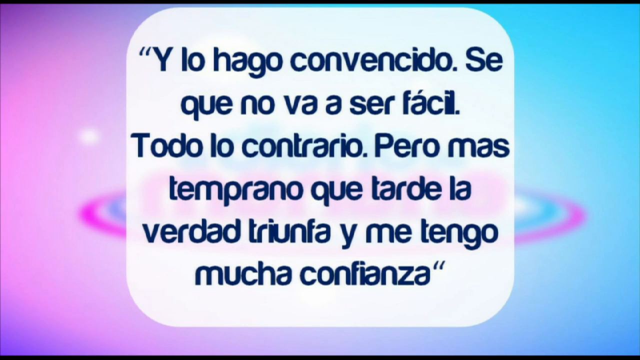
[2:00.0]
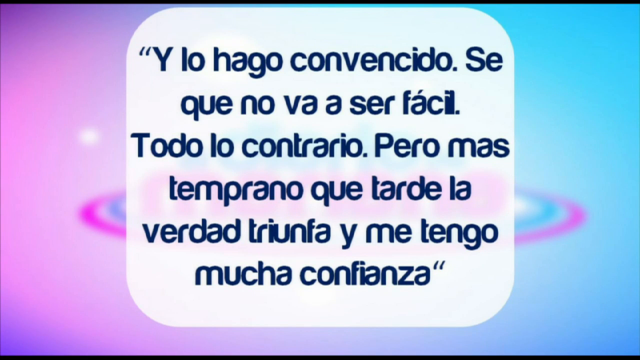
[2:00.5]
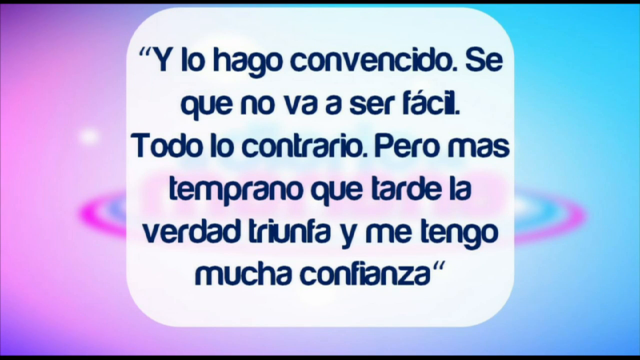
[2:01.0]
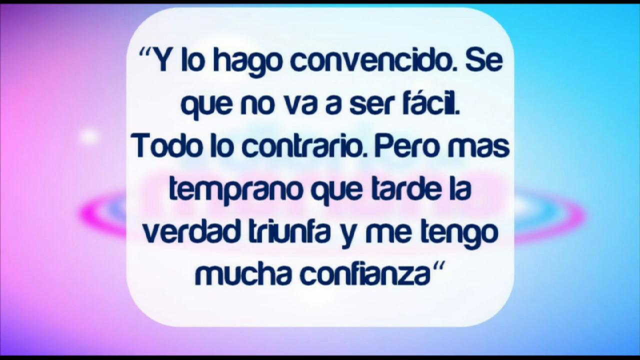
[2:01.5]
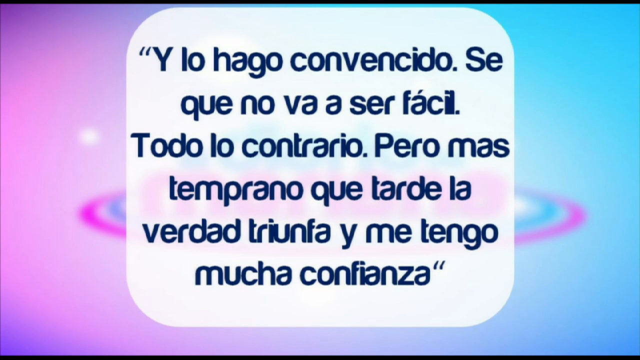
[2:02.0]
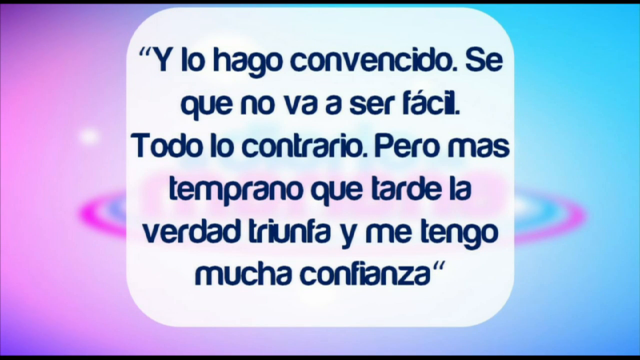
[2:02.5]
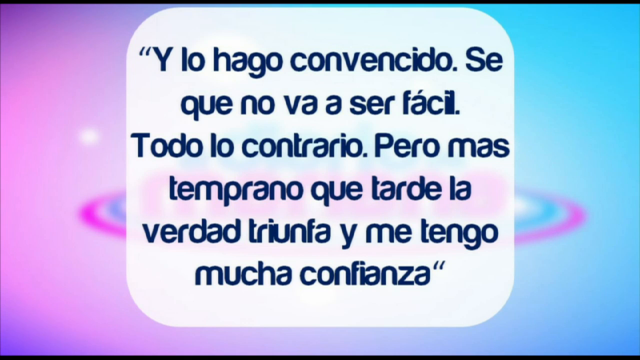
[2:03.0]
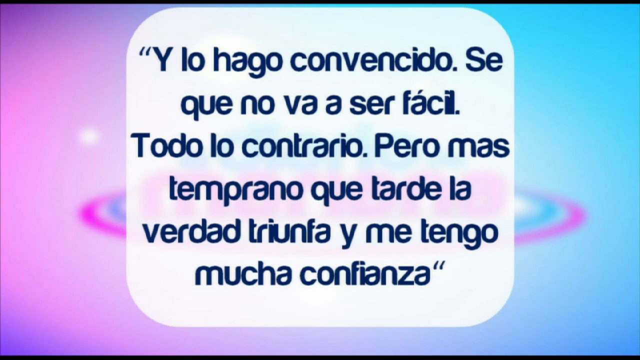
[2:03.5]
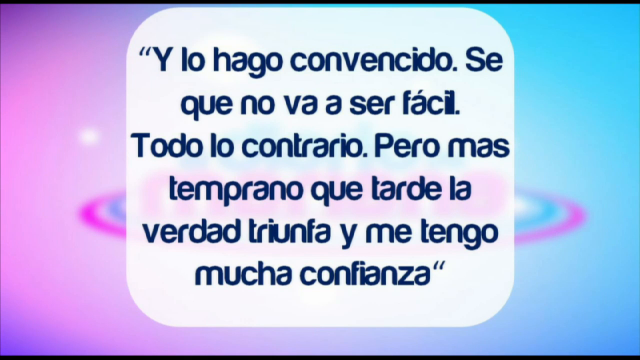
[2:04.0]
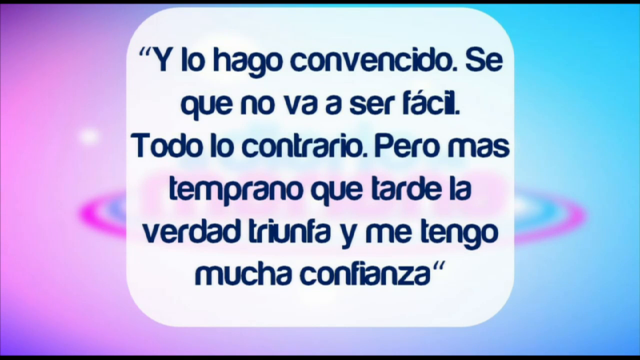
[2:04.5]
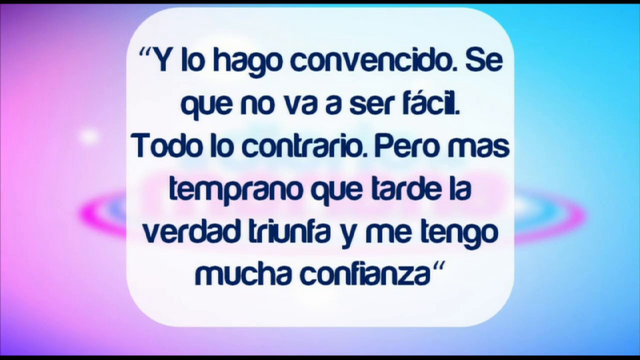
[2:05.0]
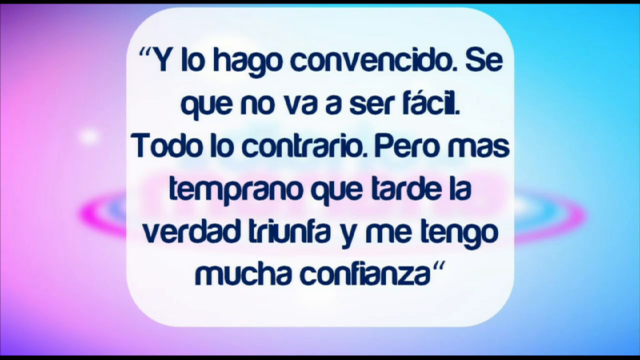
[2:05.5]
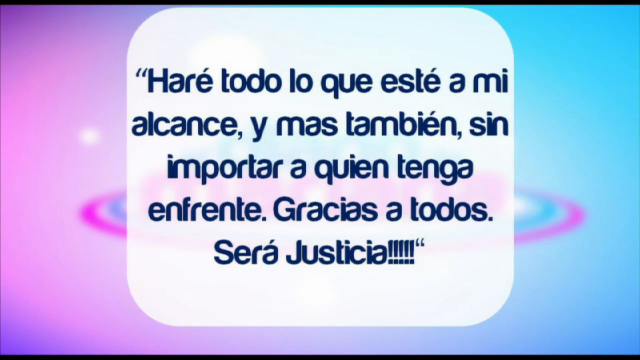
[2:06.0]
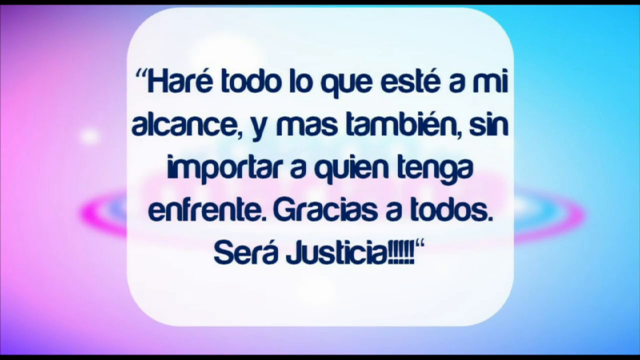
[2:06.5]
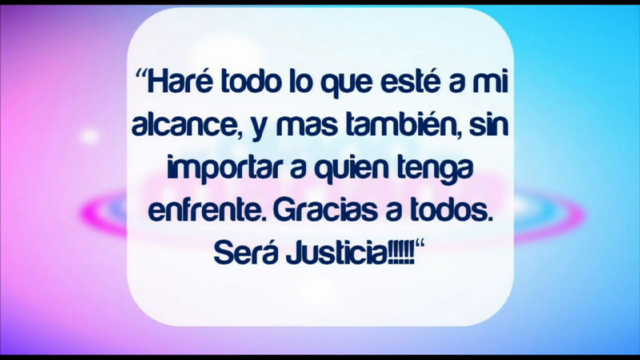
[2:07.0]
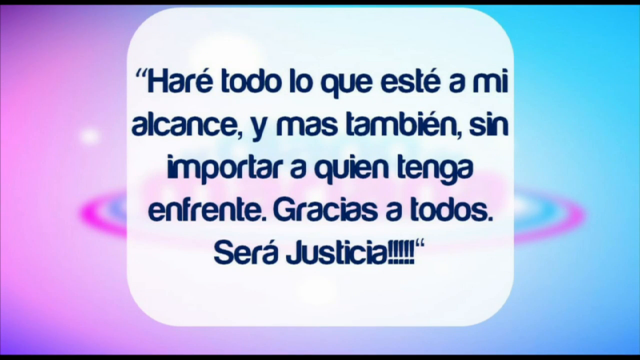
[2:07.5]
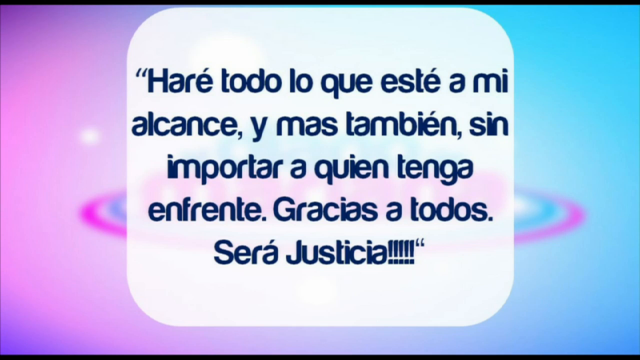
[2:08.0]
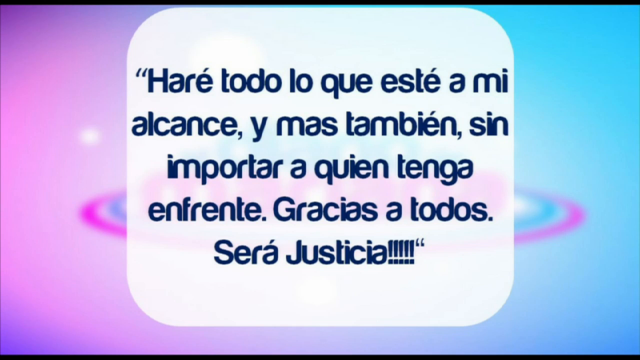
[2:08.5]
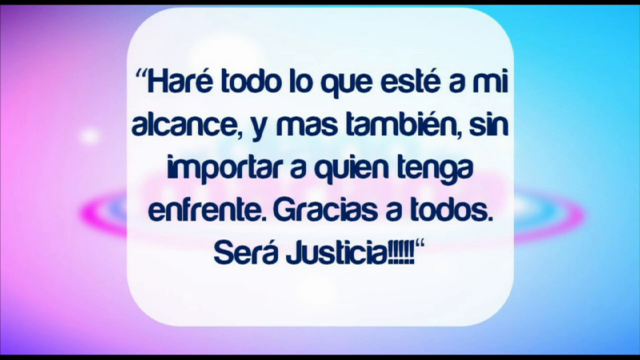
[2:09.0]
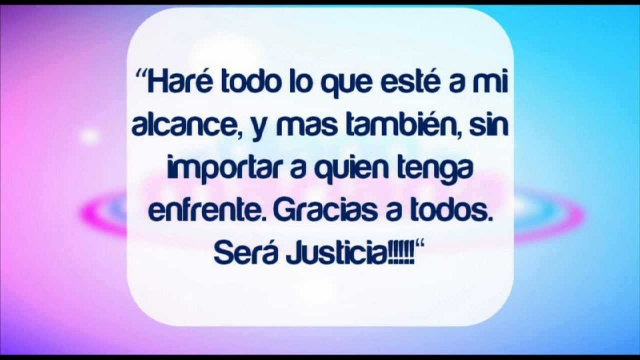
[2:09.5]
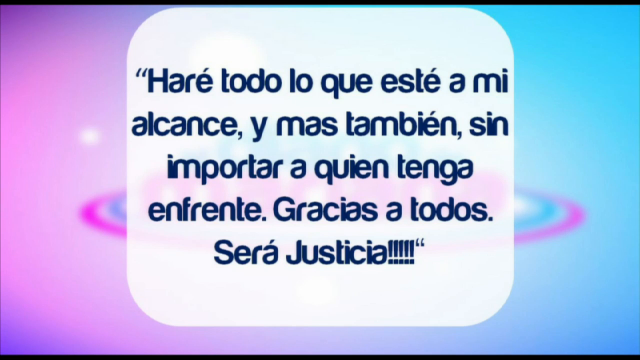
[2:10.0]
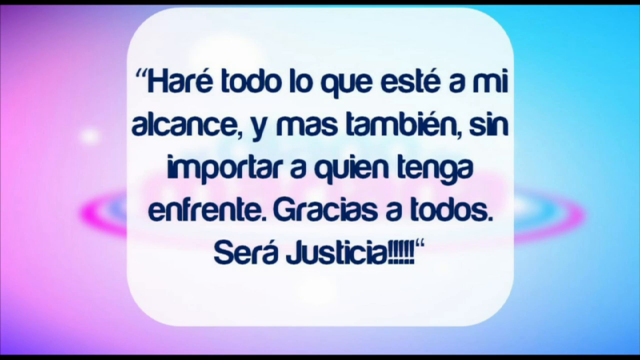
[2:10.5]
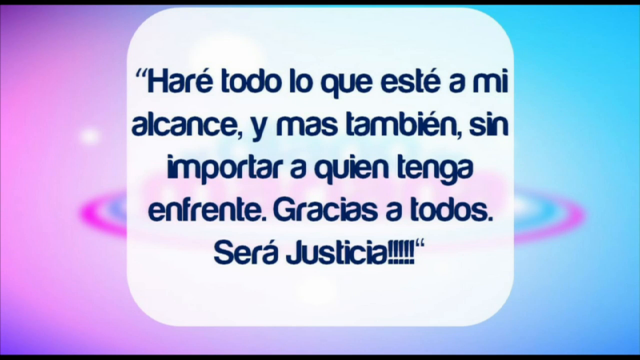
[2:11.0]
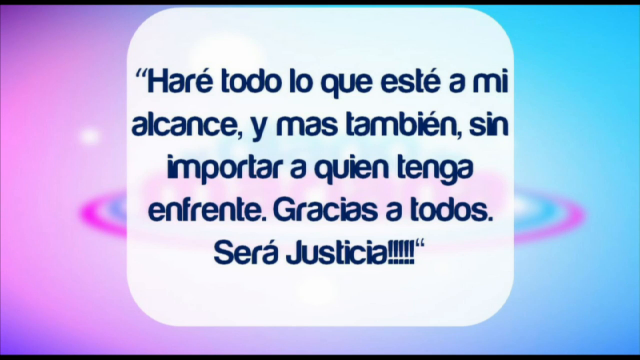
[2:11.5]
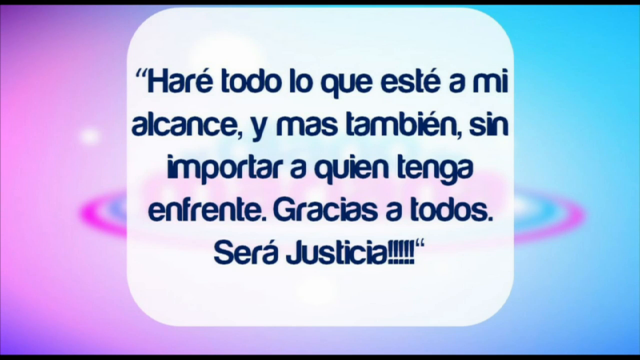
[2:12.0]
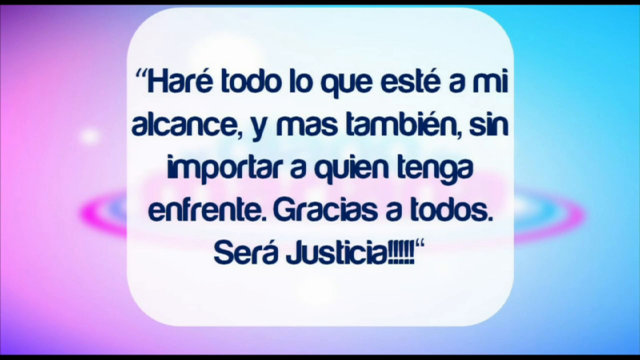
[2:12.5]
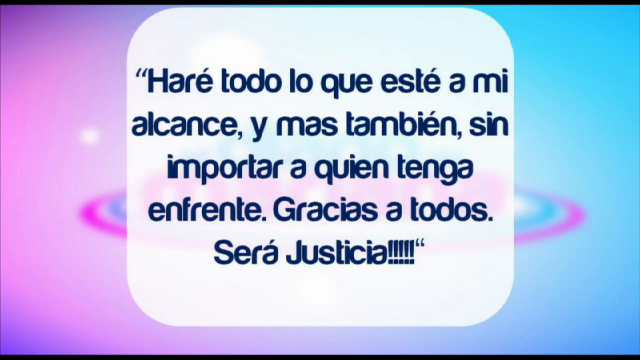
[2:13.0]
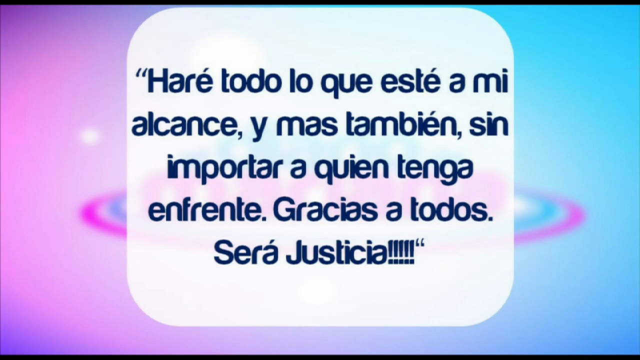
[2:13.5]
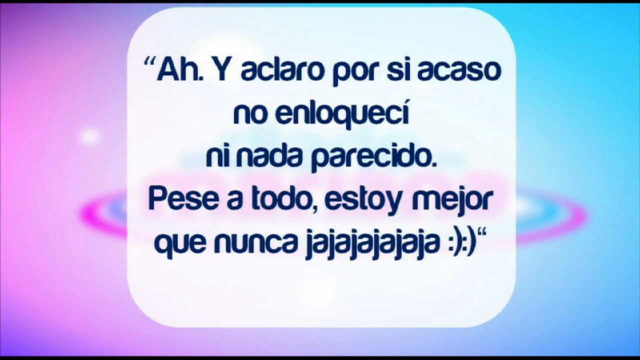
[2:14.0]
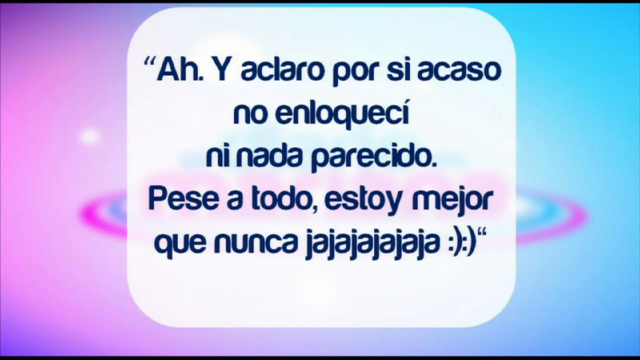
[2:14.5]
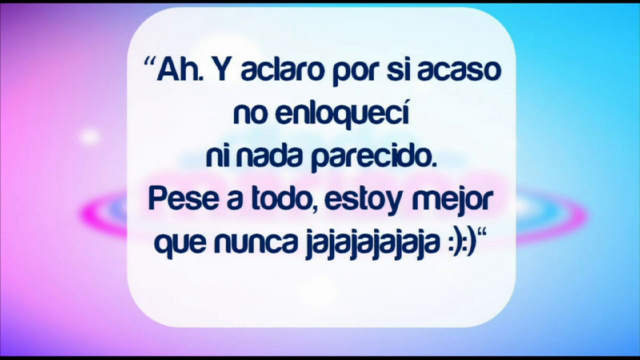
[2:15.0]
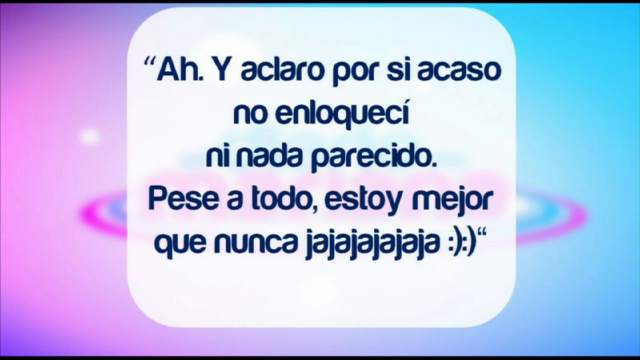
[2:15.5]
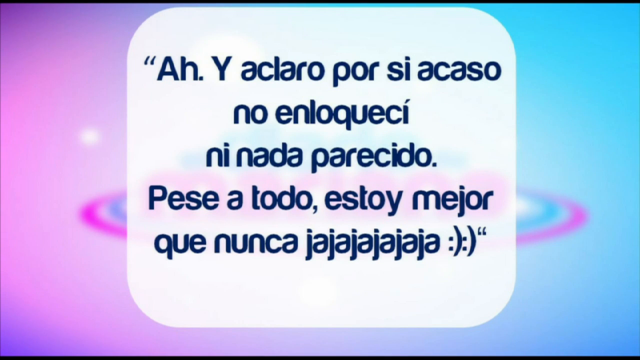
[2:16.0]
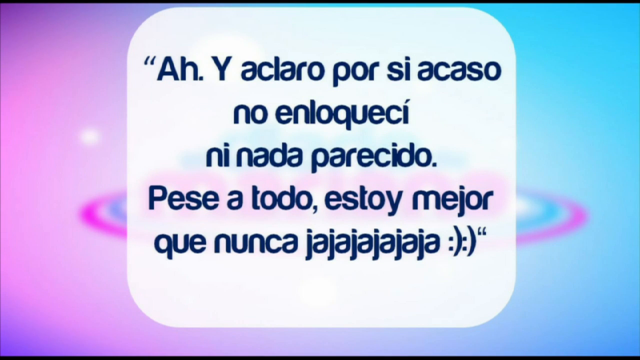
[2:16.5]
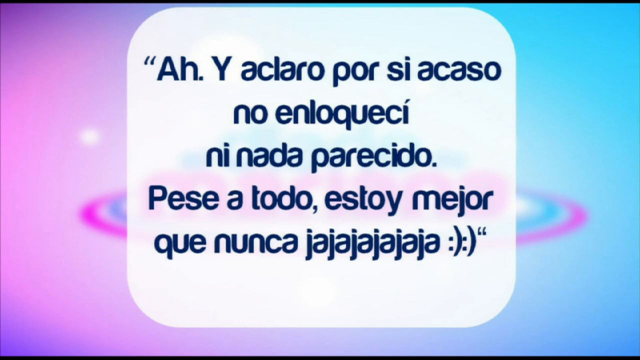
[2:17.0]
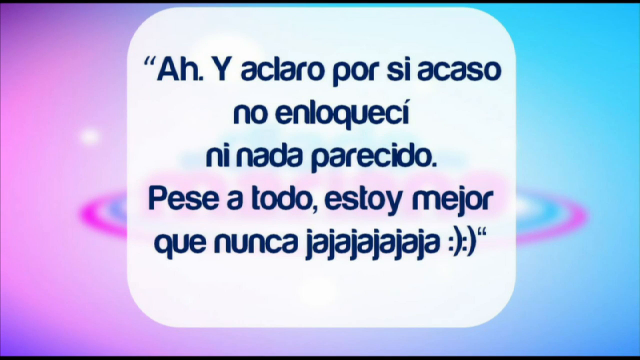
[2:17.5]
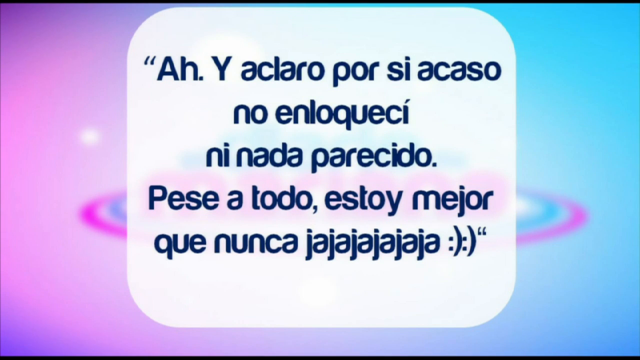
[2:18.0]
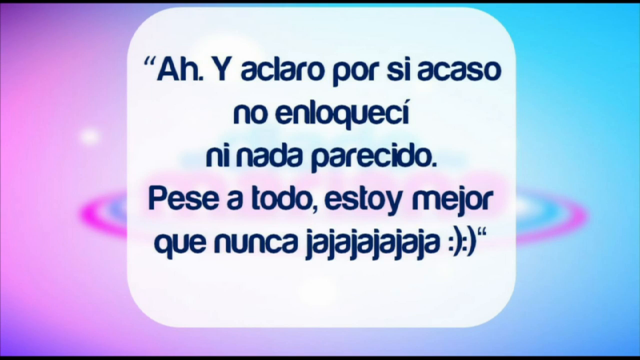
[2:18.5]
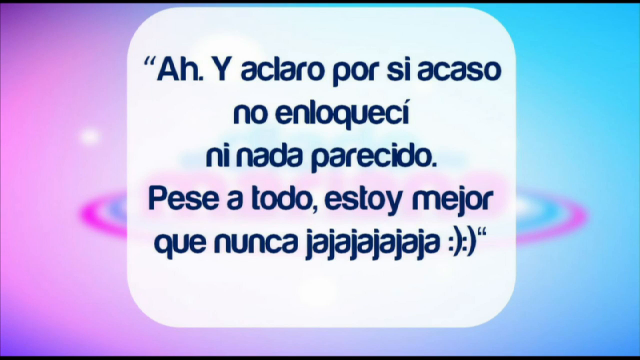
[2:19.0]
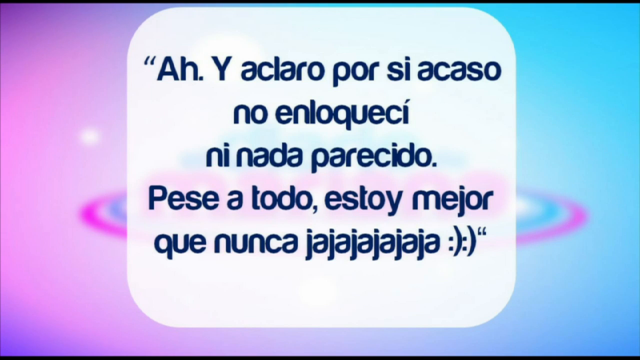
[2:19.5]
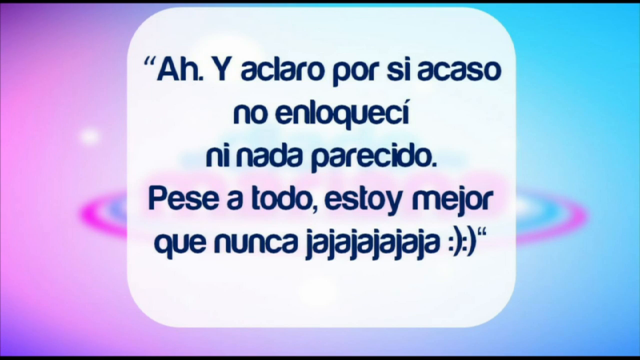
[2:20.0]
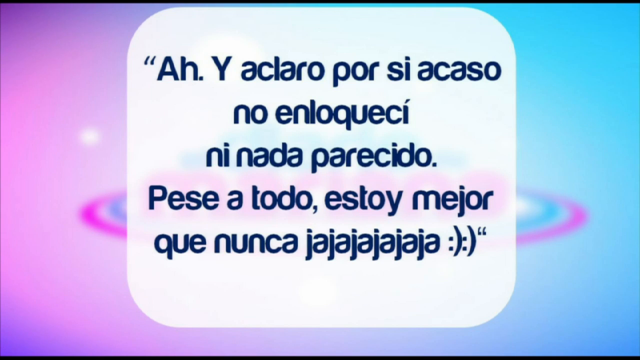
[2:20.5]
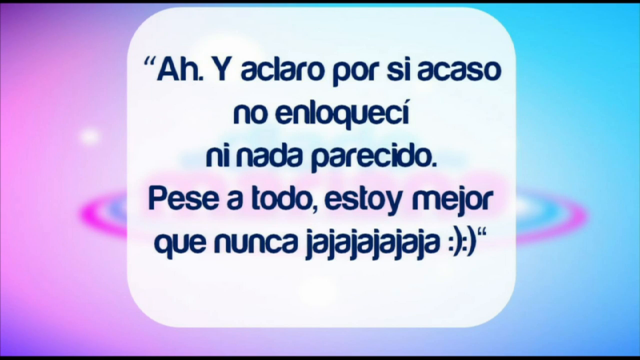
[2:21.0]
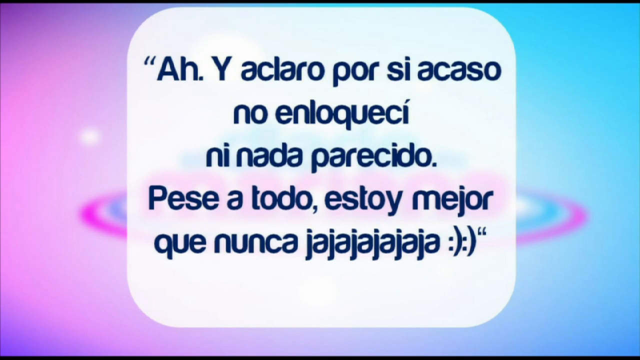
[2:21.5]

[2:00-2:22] The dark blue Spanish text continues, and the text changes again, still dark blue on a white background. It then changes to what is apparently some sort of quote in Spanish, in dark blue, ending with two sideways smiling faces made from a colon and a parenthesis. The side background of light purple on the left and light blue on the right remains, with the Spanish text in the middle in dark blue on white.